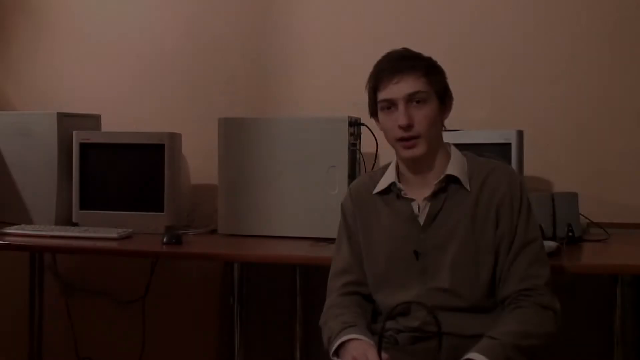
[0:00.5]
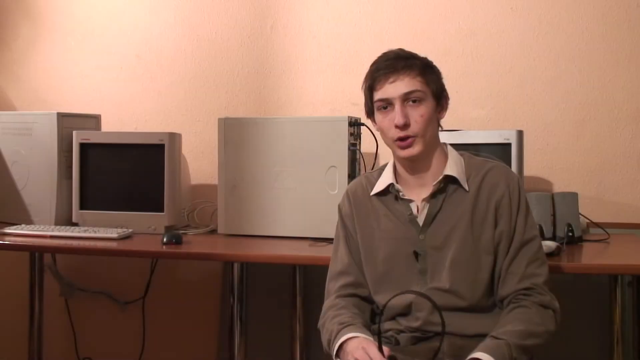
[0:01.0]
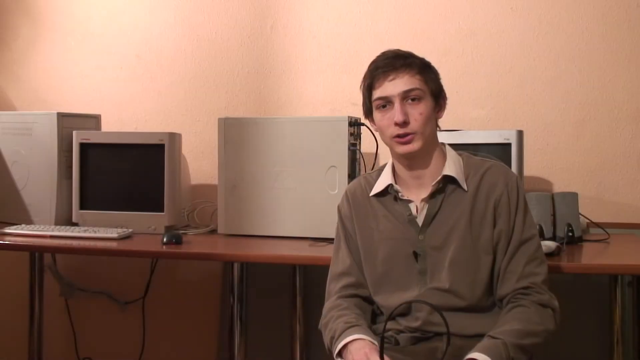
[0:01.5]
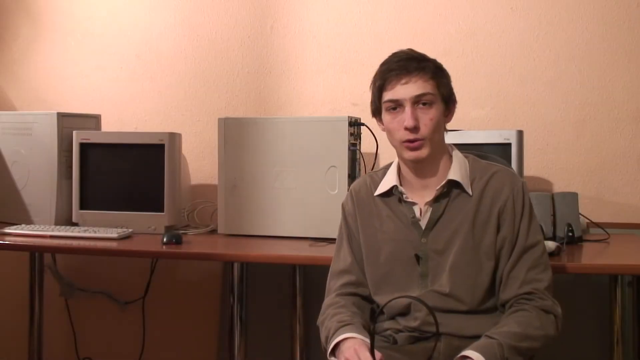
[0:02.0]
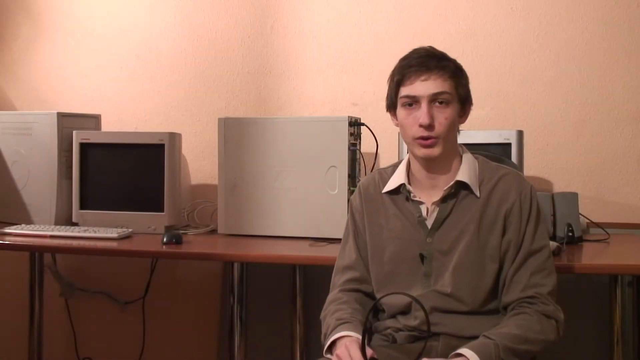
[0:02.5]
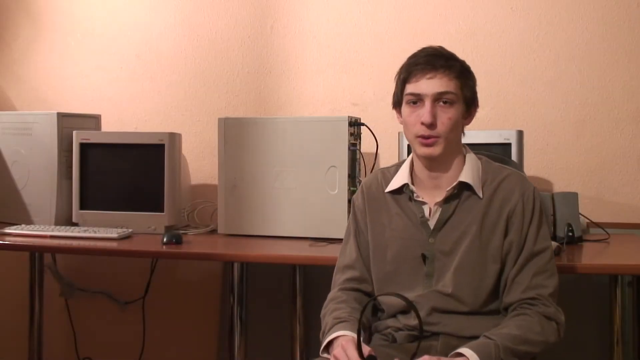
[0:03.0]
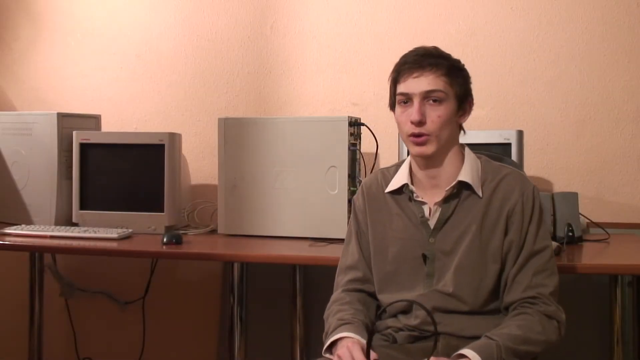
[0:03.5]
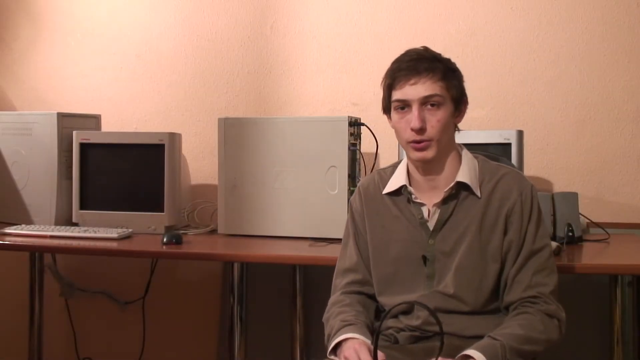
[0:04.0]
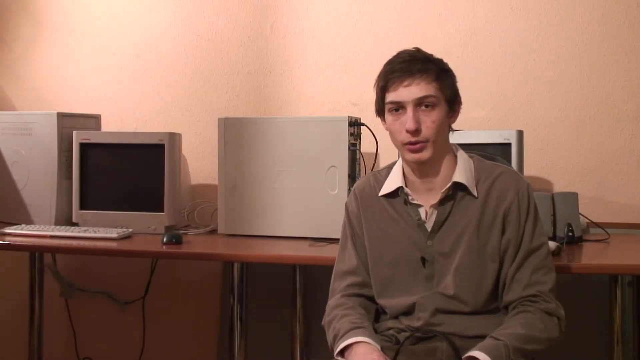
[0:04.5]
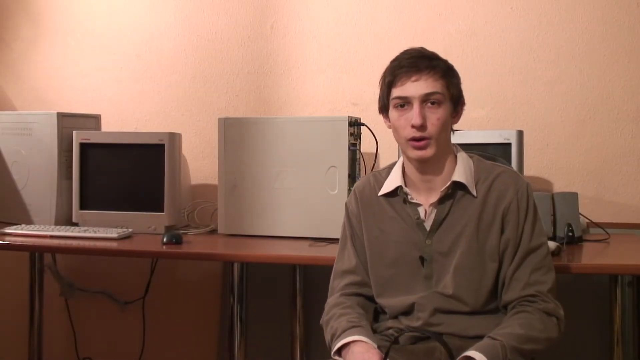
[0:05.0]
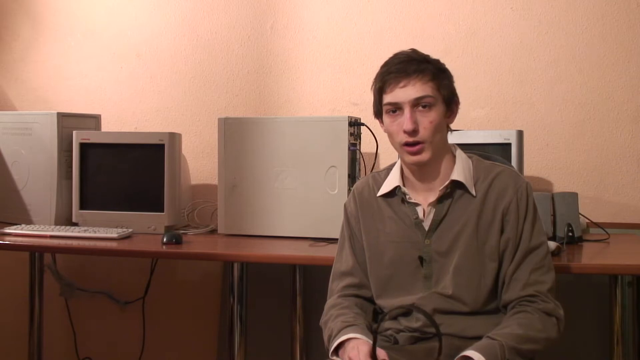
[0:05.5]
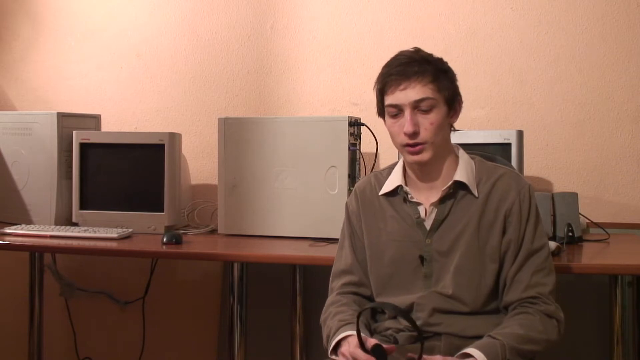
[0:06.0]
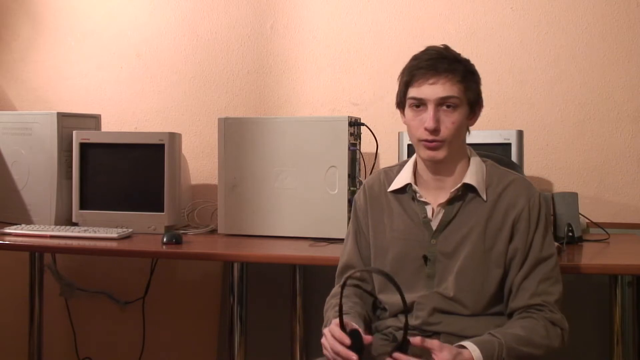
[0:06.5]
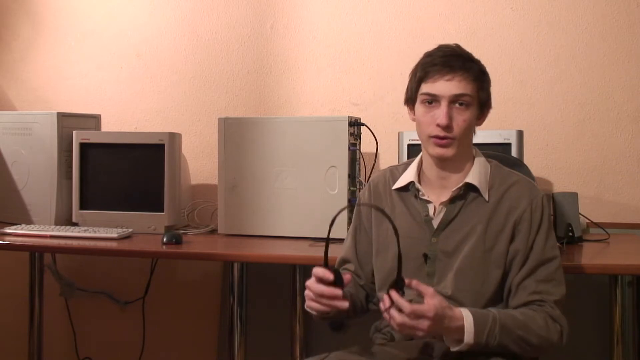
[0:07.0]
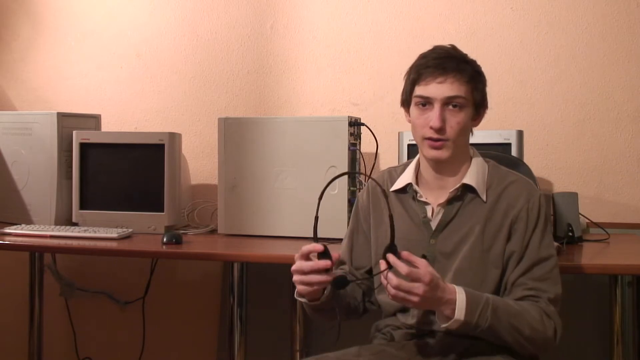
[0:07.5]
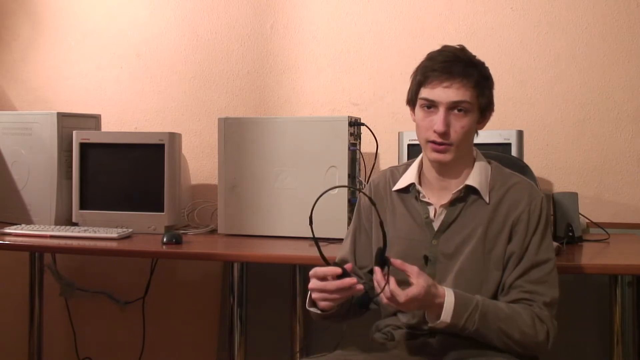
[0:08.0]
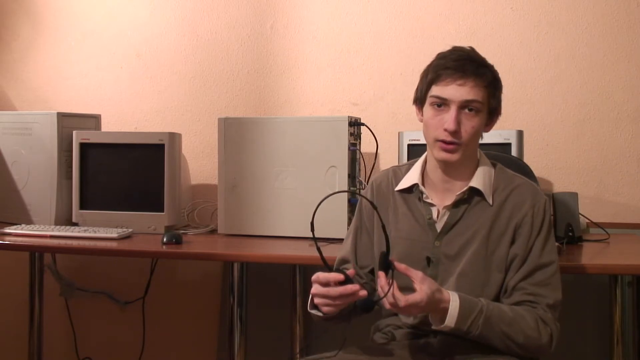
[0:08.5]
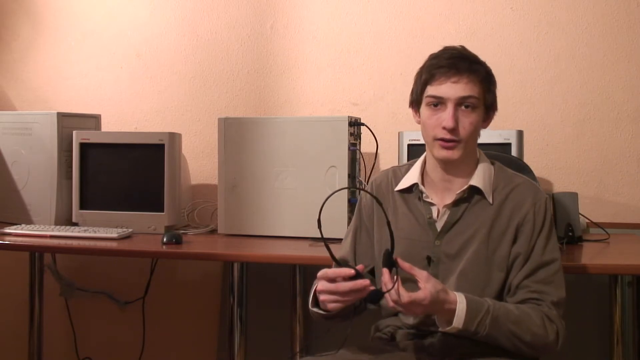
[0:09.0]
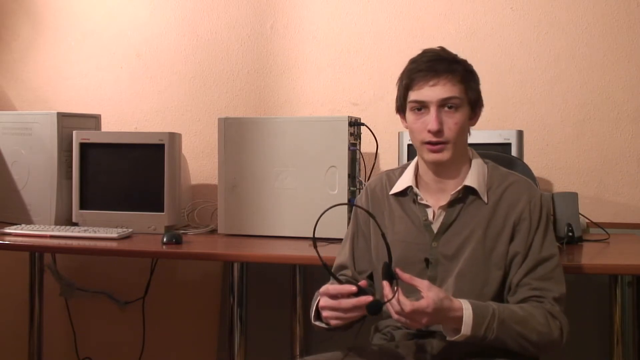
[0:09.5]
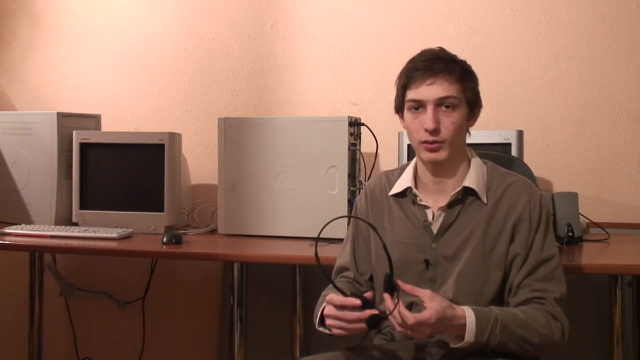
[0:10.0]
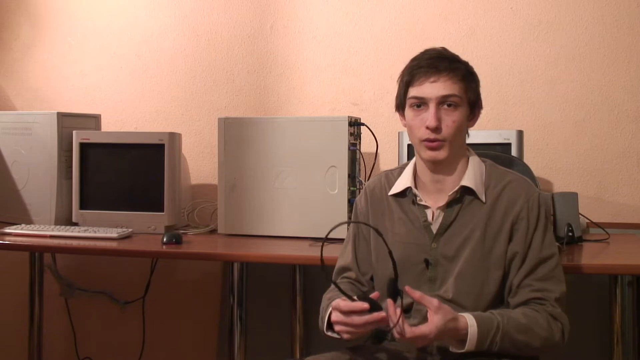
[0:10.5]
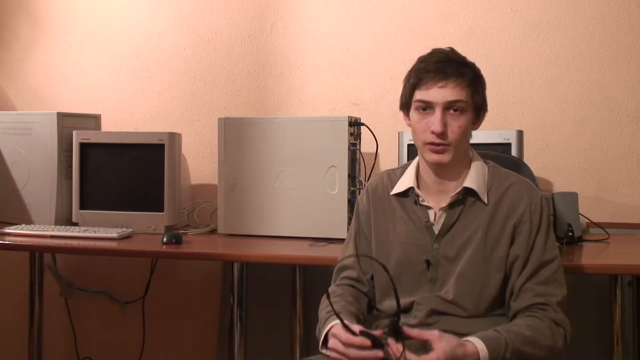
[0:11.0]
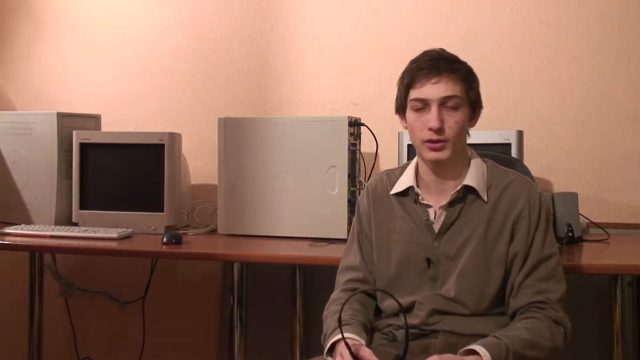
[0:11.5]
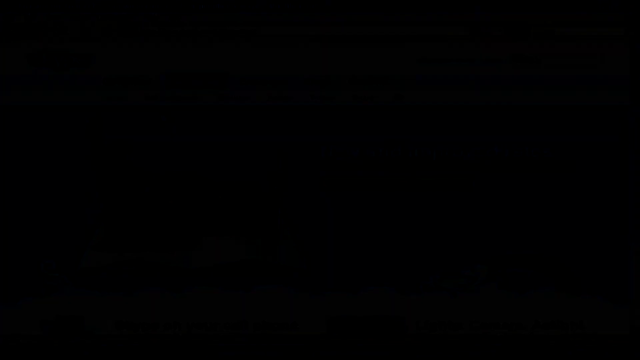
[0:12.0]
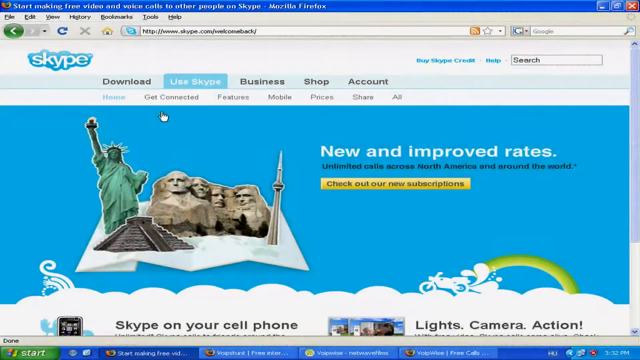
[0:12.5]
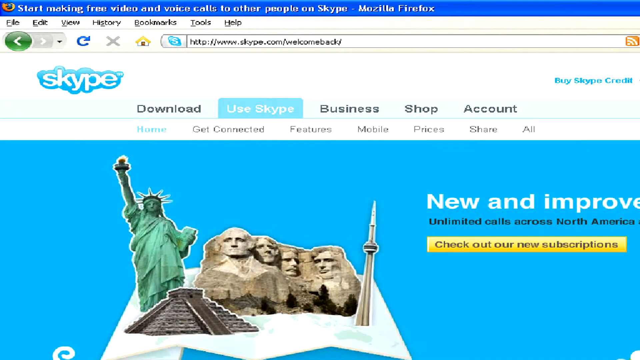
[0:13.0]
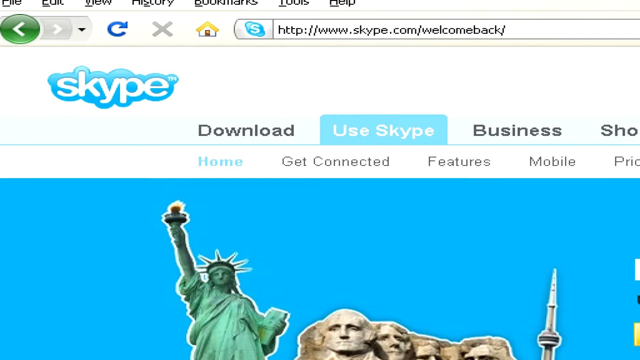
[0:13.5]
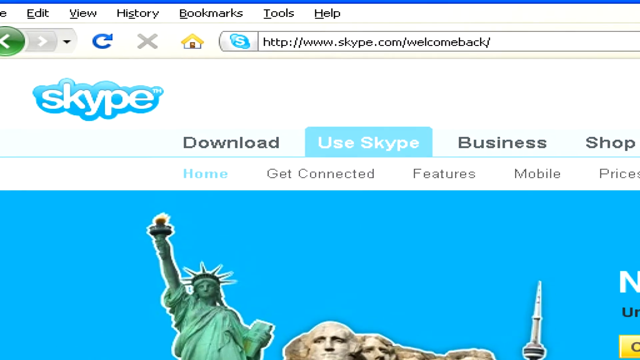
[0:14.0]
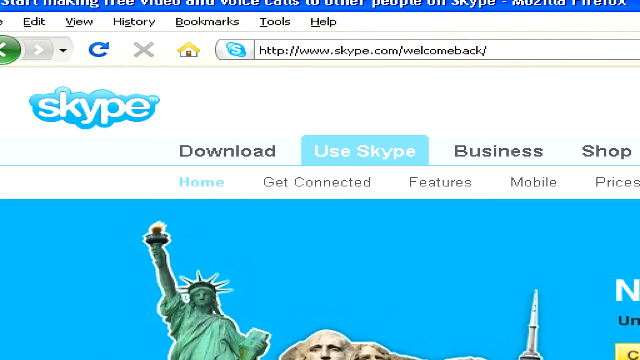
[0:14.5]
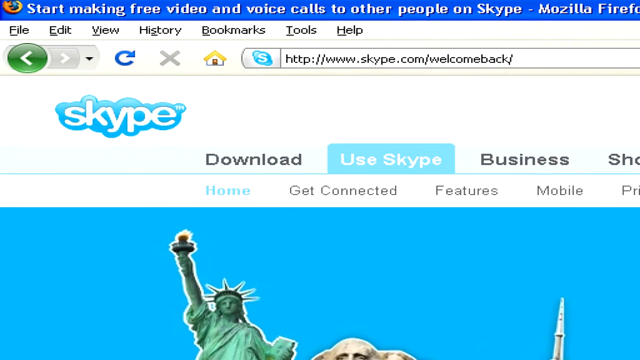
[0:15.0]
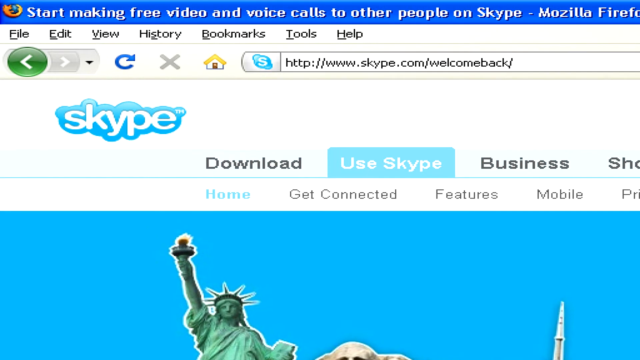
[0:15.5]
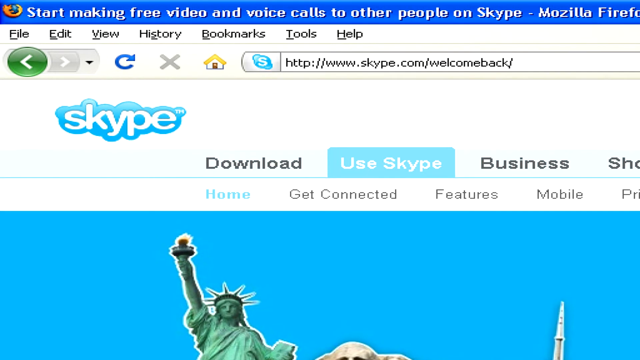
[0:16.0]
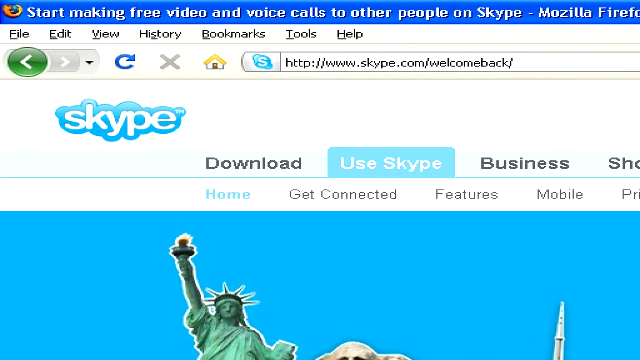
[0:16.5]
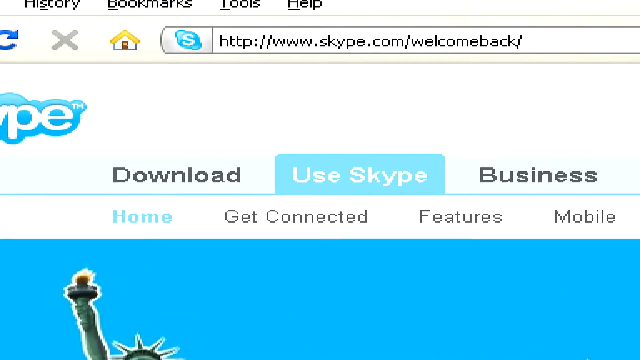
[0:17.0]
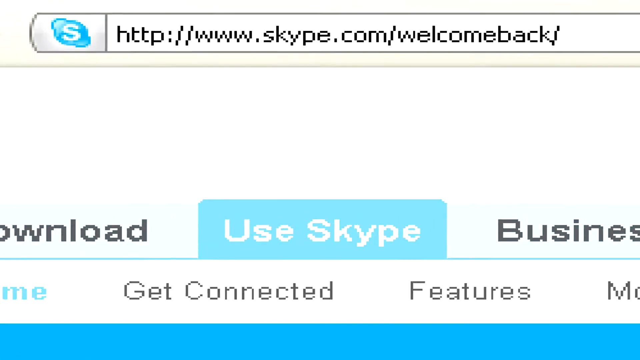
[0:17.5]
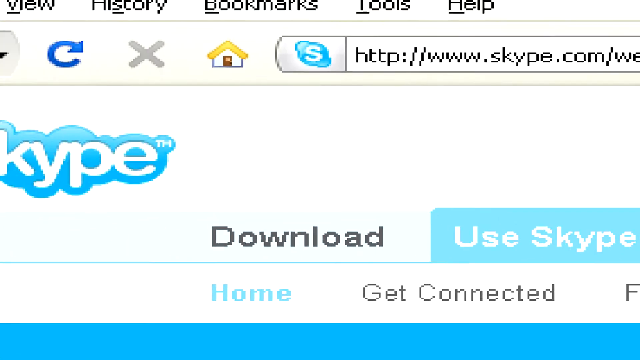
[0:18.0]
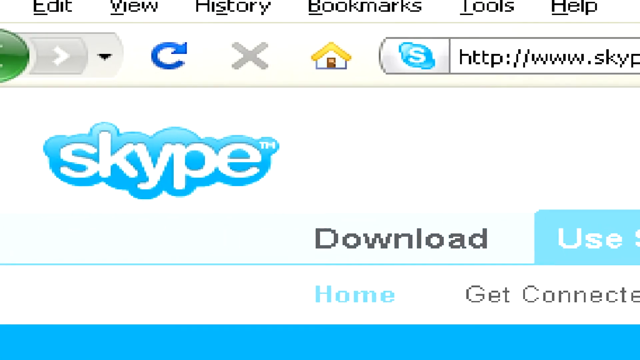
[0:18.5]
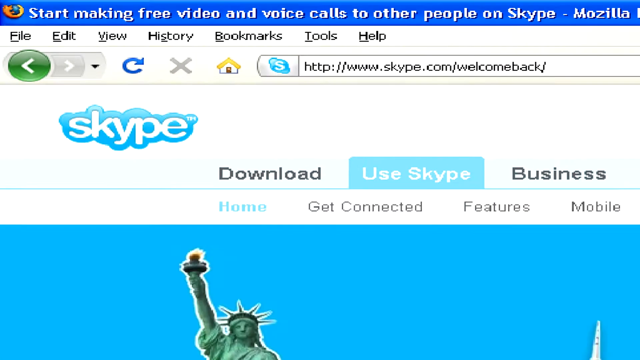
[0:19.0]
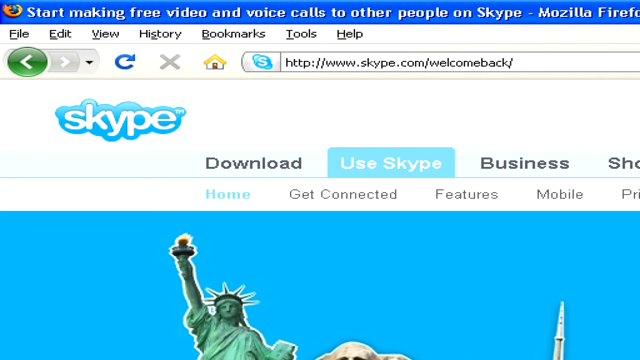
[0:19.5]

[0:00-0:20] A man wearing a long t-shirt is surrounded by computers. At the start he shows his headset. The setting looks like an office. The video seems to be about setting up a Skype account to chat or make calls.